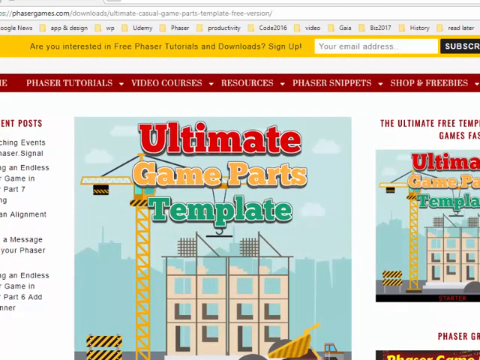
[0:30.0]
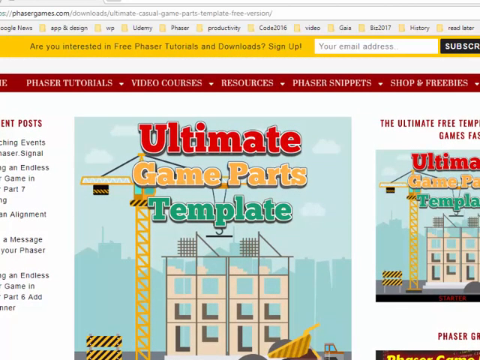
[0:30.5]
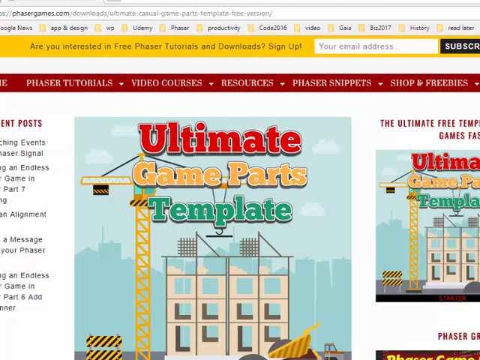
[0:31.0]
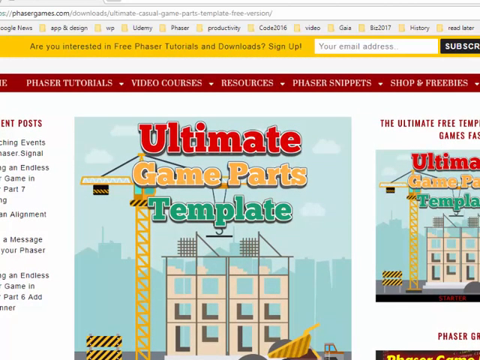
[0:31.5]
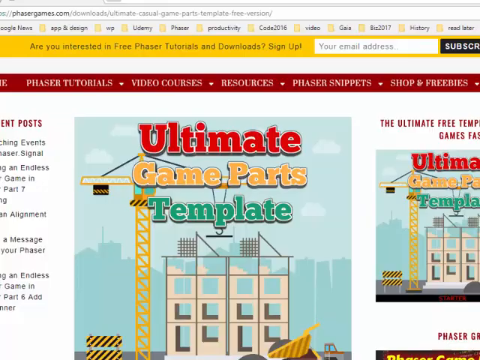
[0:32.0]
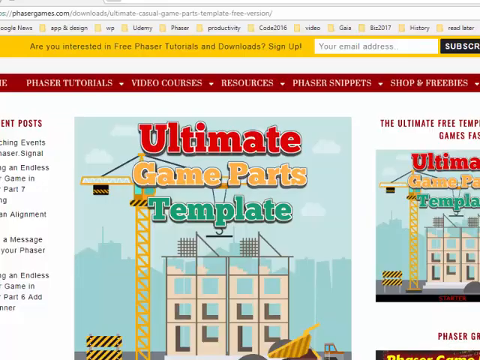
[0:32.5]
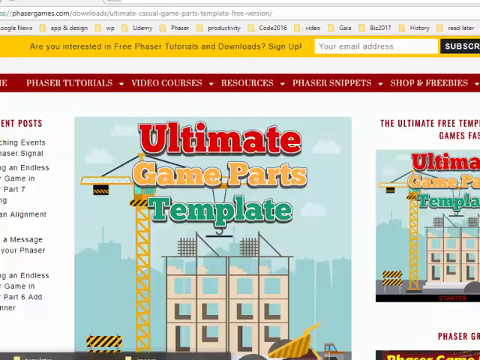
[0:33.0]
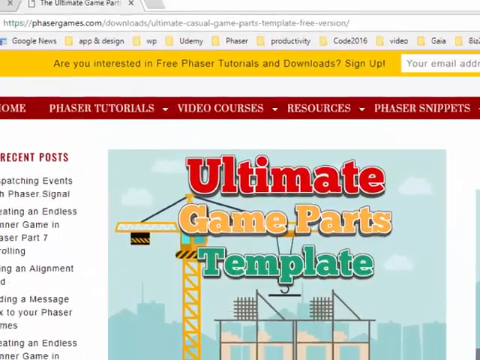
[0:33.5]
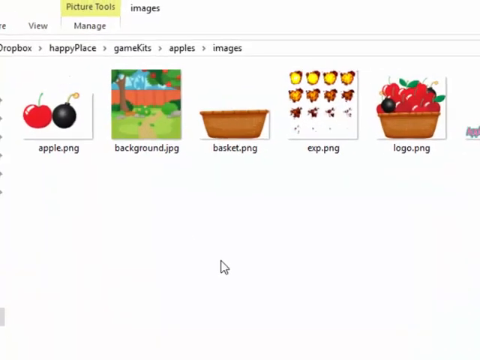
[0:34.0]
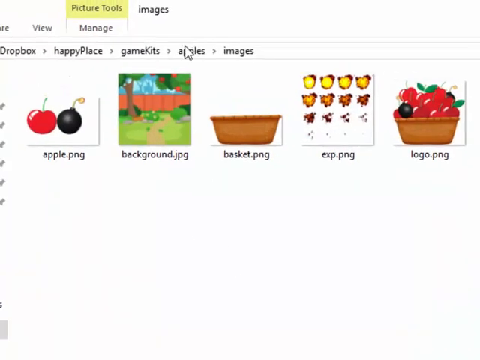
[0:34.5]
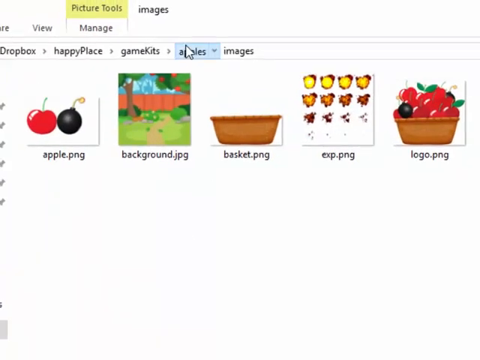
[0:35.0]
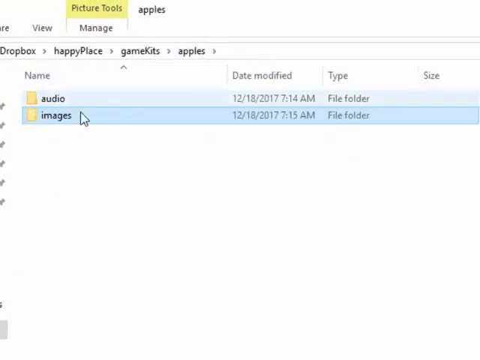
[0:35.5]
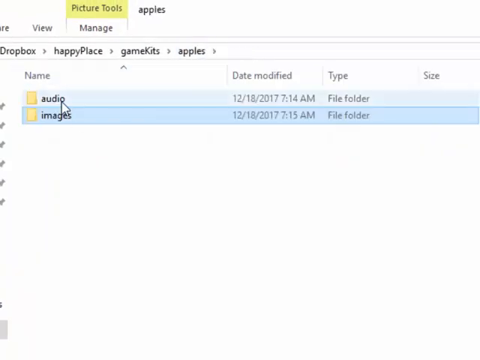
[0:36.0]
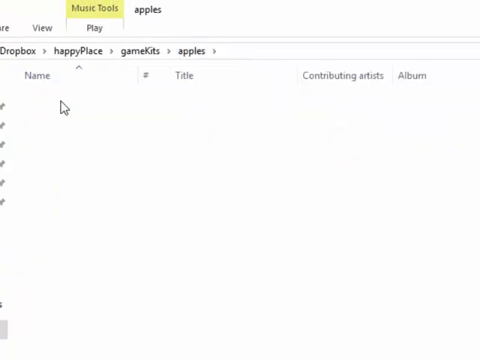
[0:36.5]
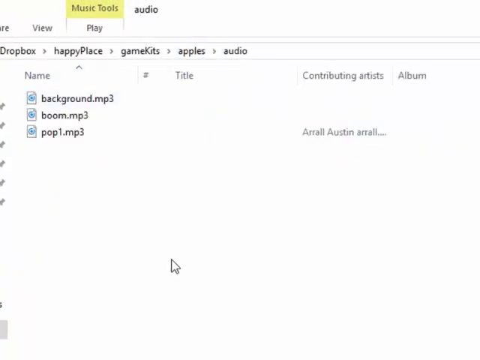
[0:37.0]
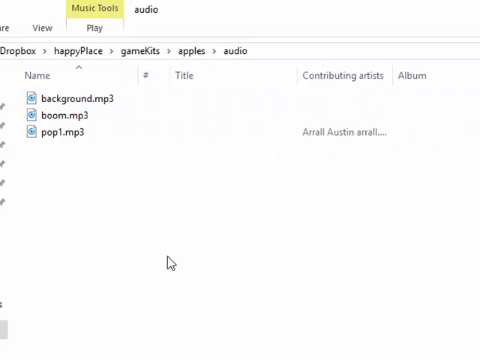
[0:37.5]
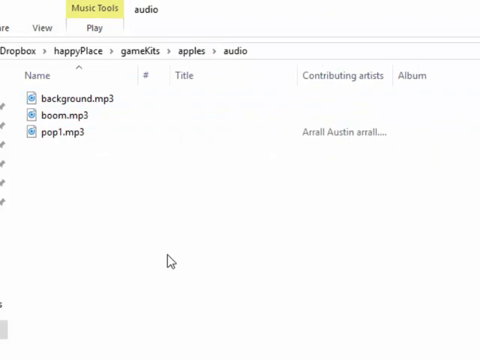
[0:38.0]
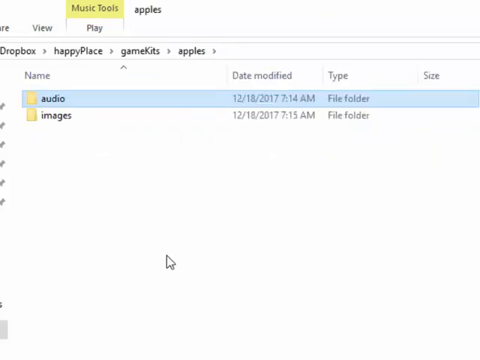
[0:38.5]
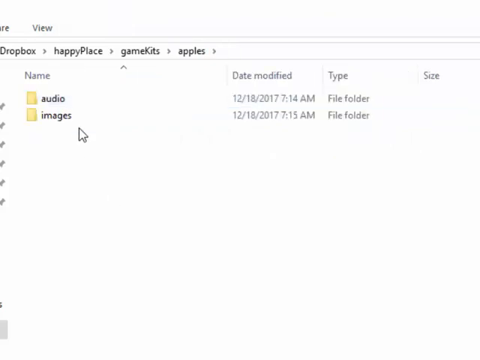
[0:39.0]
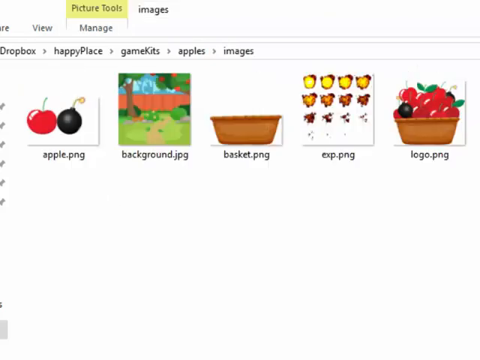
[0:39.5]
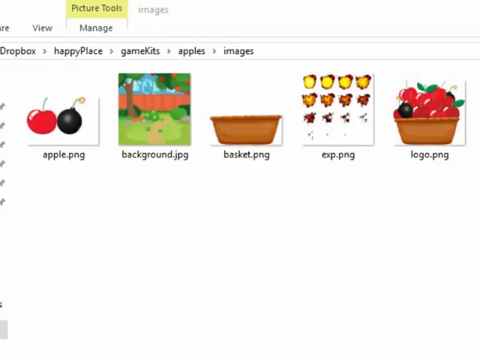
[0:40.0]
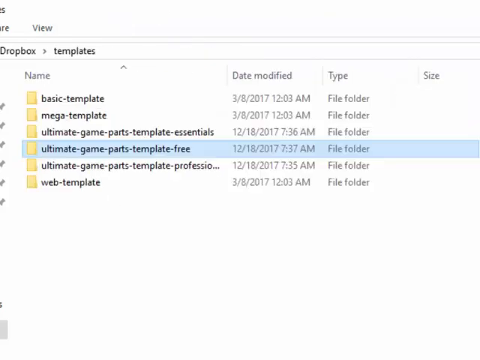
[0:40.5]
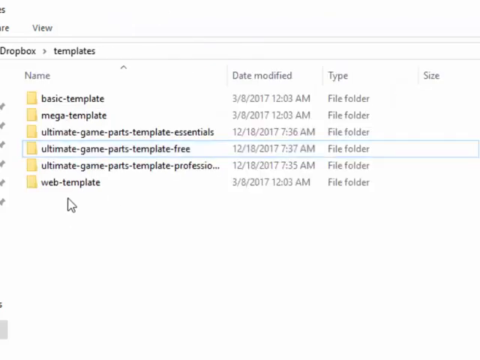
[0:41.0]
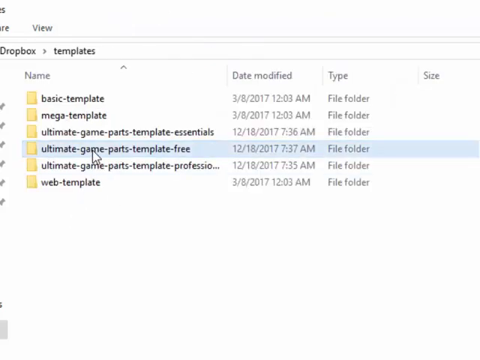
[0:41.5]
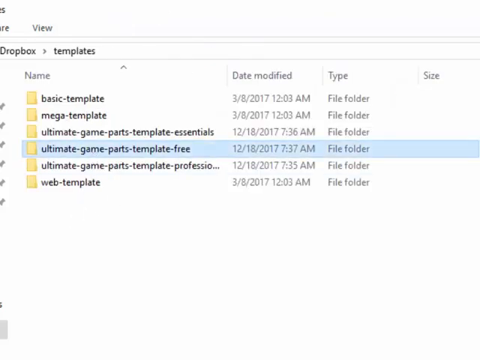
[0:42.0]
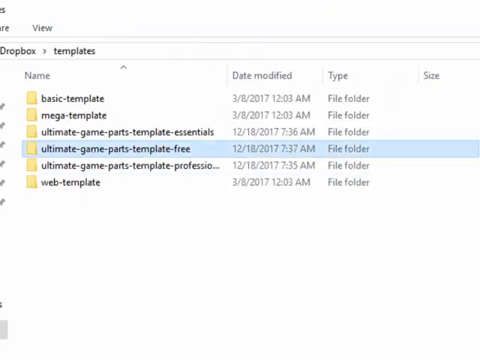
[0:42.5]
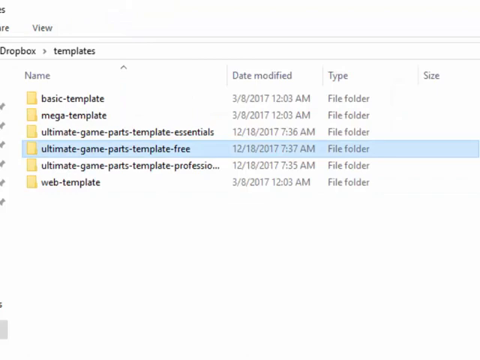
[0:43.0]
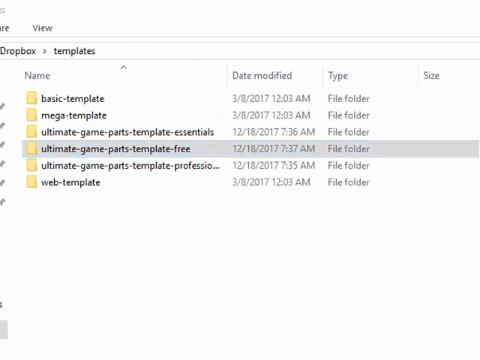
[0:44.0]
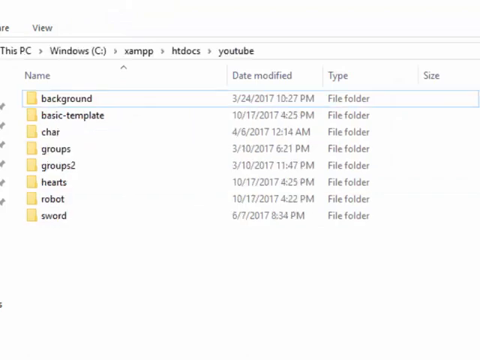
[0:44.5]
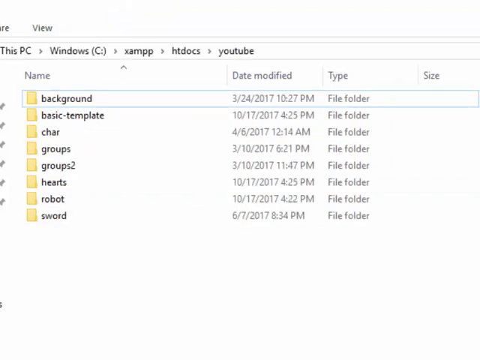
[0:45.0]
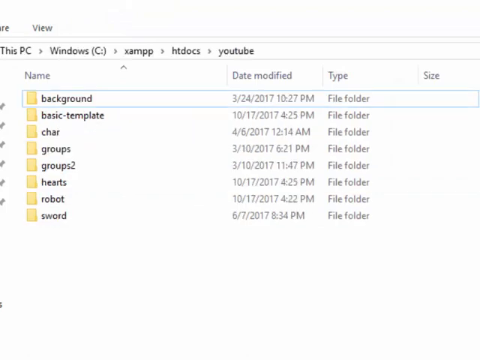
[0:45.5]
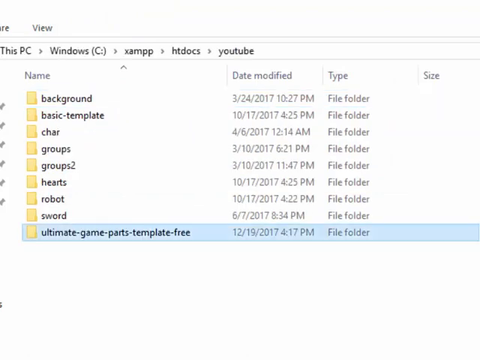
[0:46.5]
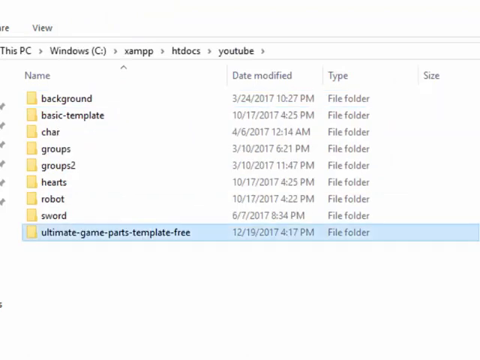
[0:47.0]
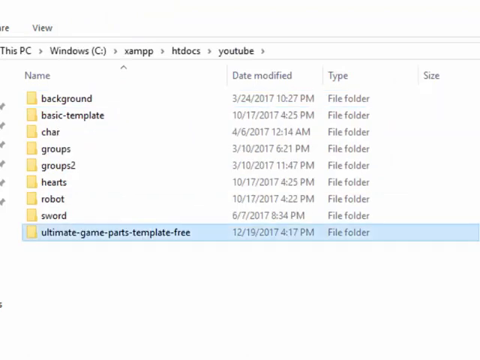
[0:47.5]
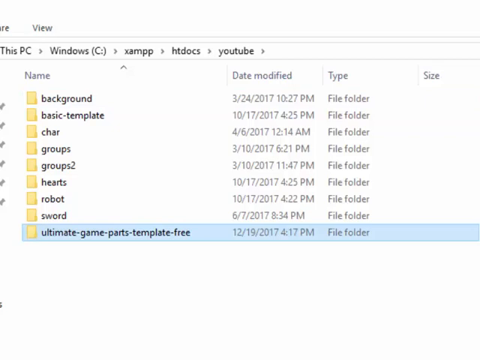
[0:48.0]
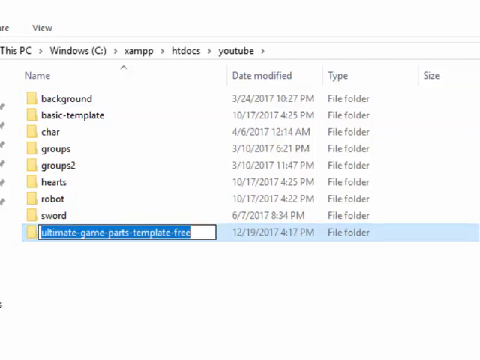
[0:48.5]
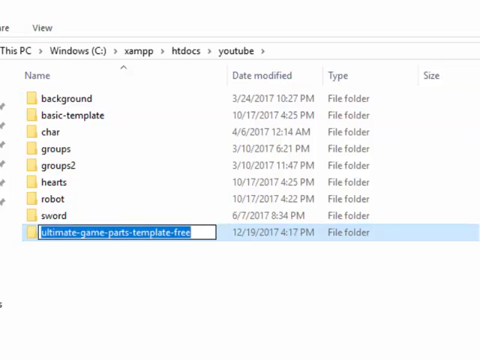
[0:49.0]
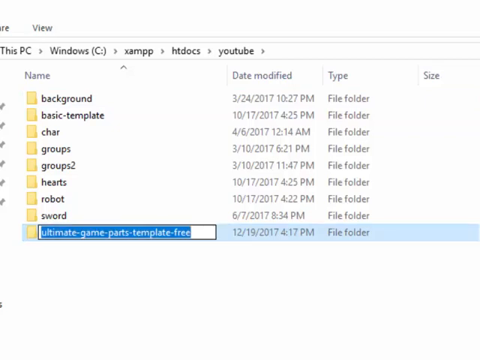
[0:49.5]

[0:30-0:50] An Ultimate Game Parts webpage on phasergames.com is shown; the view zooms in and scrolls, then returns to a folder on the computer with six image thumbnails. The first is an apple and a bomb, named apple.png. The next is a backyard scene with trees, a fence, a walking path, grass and bushes, called background.jpg. The next is a brown, shallow basket seen from the front, called basket.png. The next holds little images too small to make out, arranged in four rows of four, named exp.png. The next is a brown basket seen from the front, filled with shiny red apples and two black bombs, named logo.png. The last is a title banner reading "apples and bombs" in pink, named title.png. The folder has a solid white background. The view zooms in, the user clicks on apples and goes to an audio folder, then clicks in and out of various folders, including background and ultimate game parts template. They rename it to A and go back to the website.